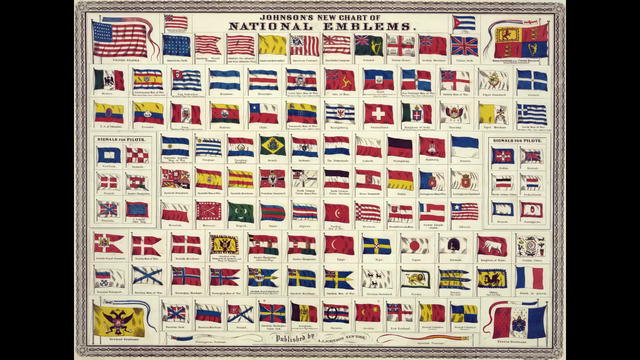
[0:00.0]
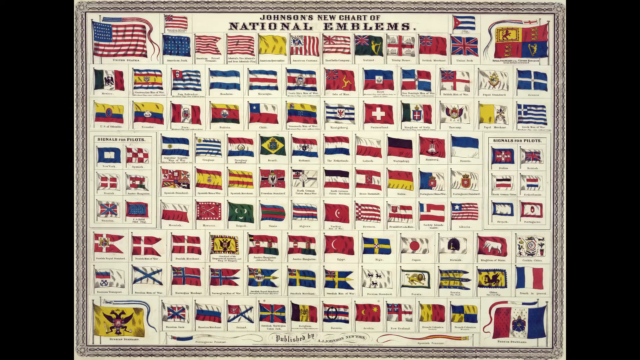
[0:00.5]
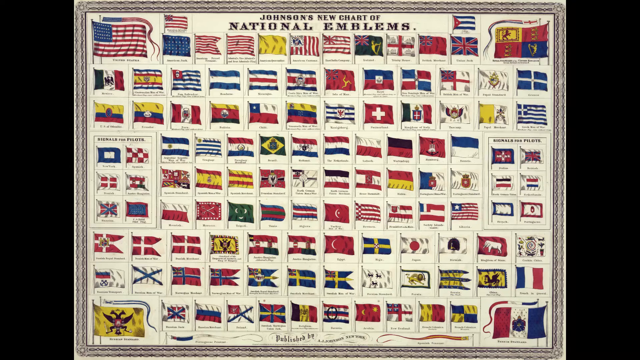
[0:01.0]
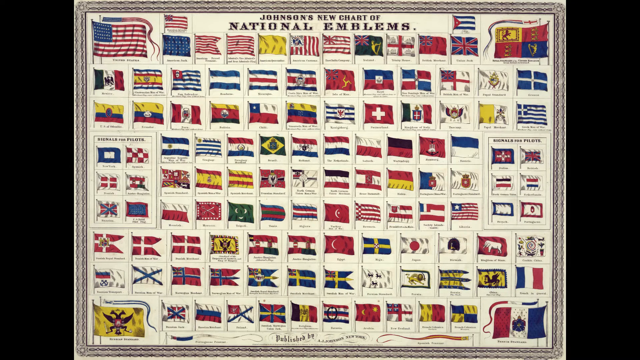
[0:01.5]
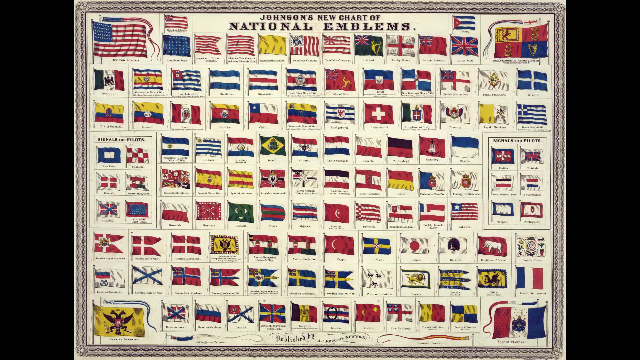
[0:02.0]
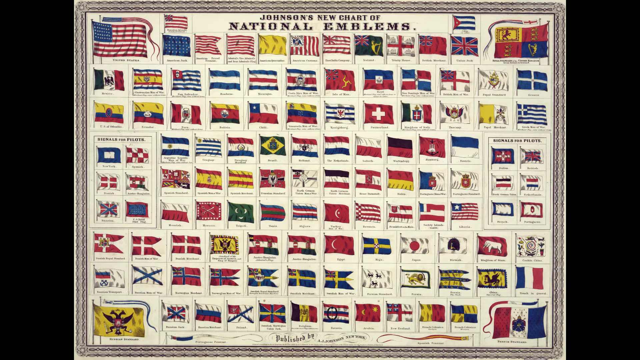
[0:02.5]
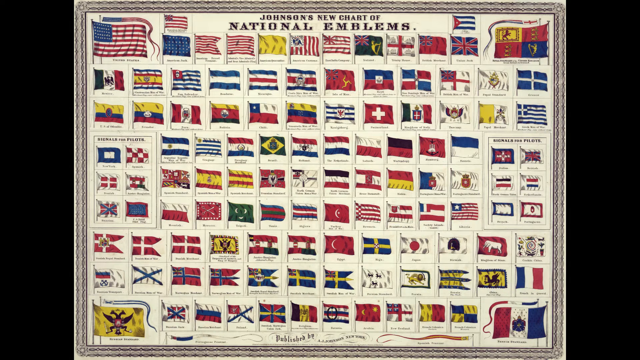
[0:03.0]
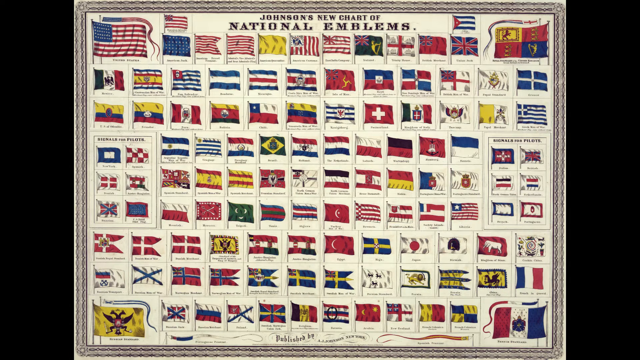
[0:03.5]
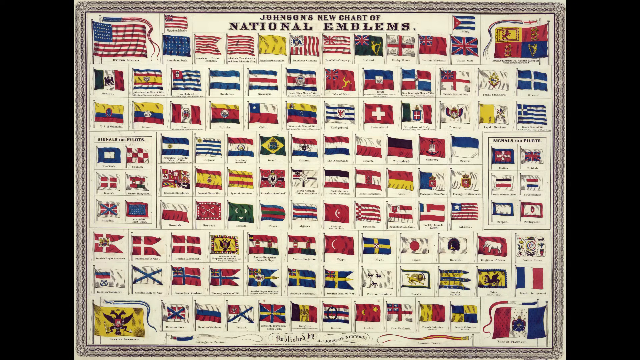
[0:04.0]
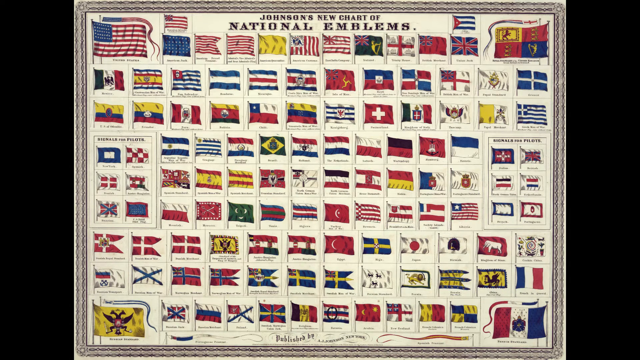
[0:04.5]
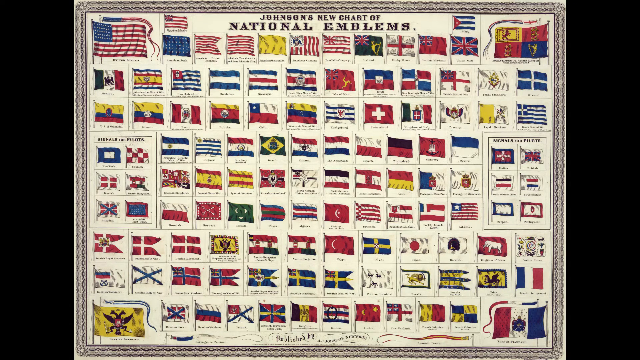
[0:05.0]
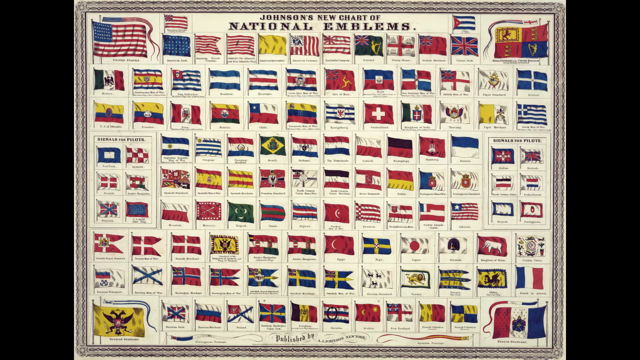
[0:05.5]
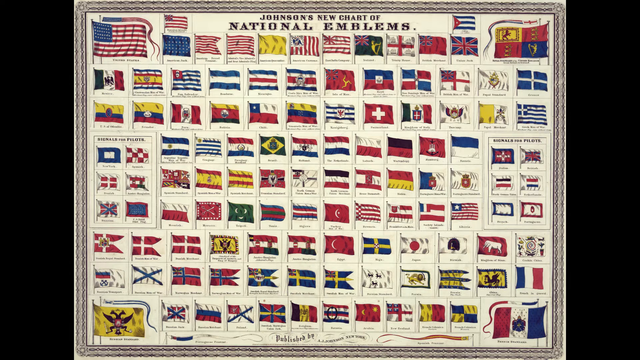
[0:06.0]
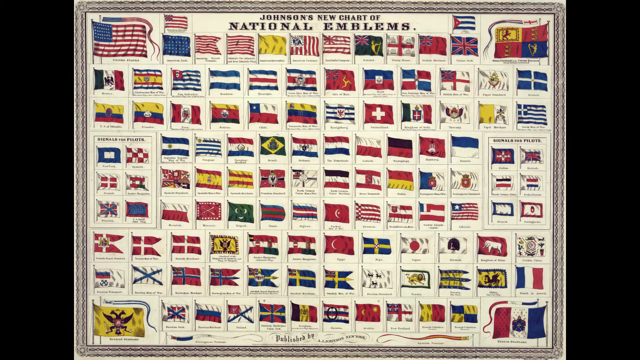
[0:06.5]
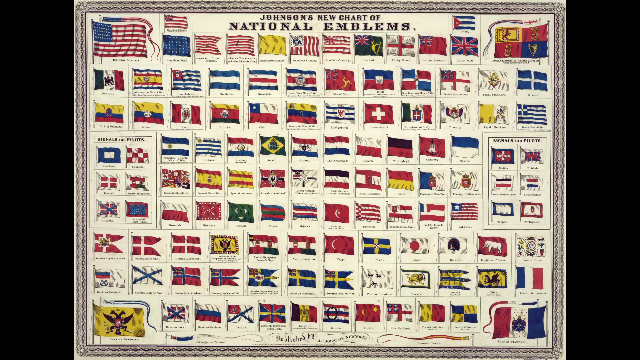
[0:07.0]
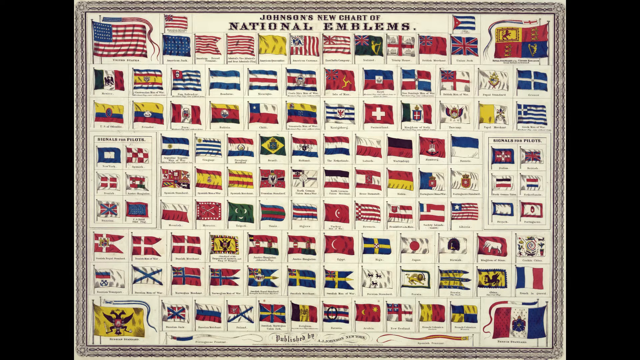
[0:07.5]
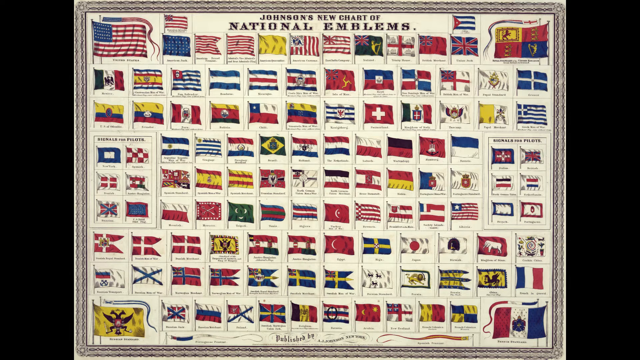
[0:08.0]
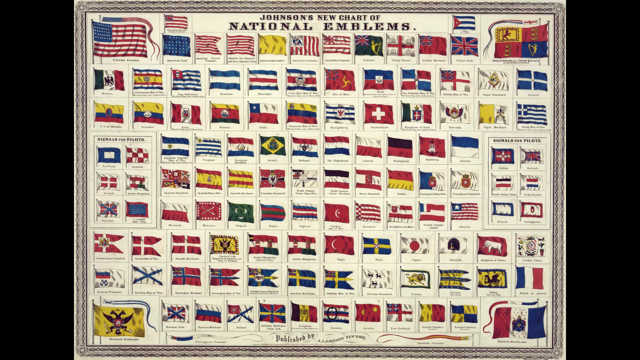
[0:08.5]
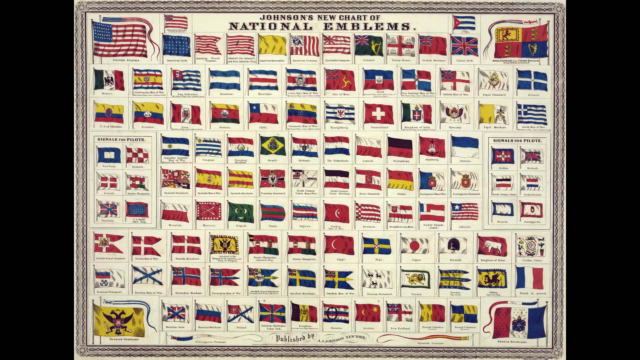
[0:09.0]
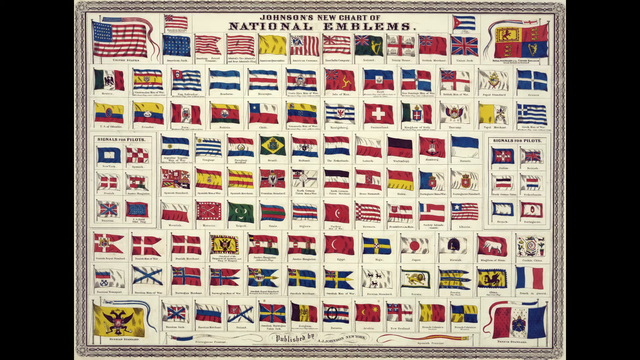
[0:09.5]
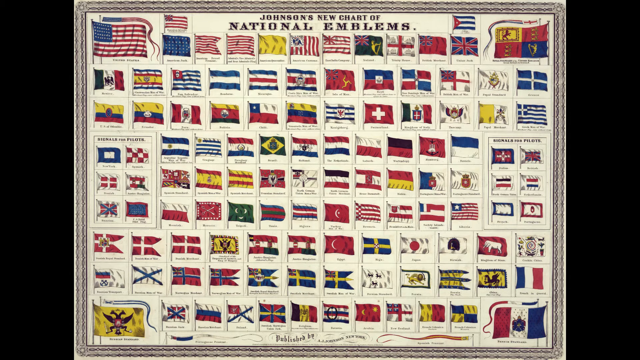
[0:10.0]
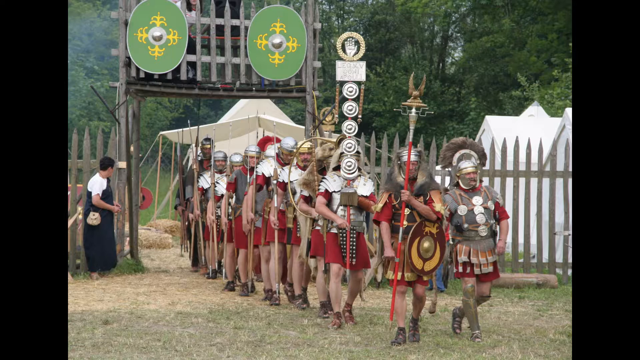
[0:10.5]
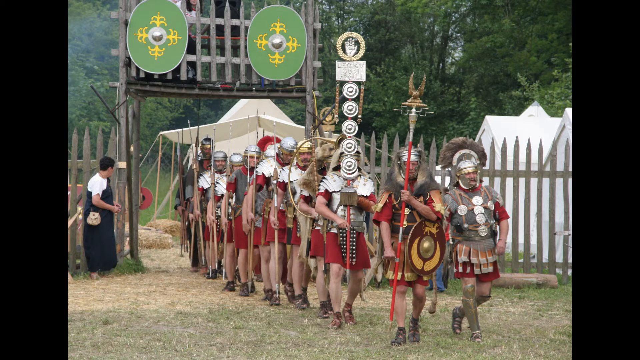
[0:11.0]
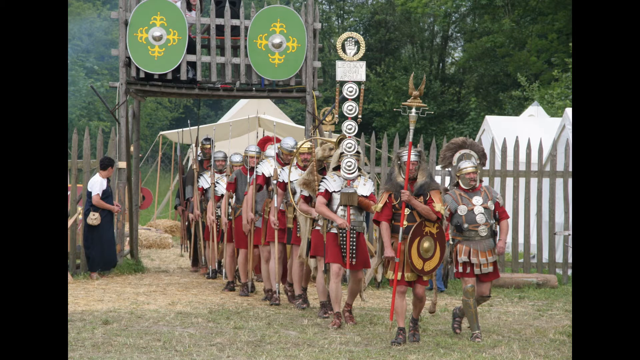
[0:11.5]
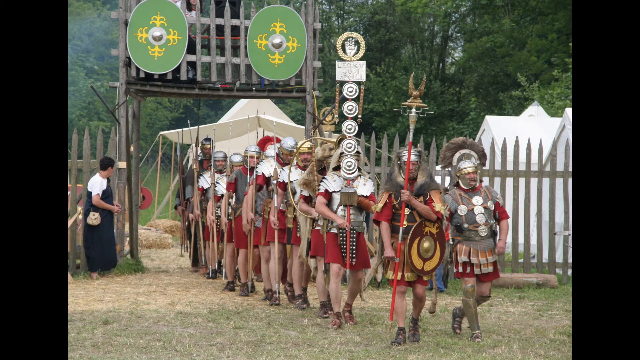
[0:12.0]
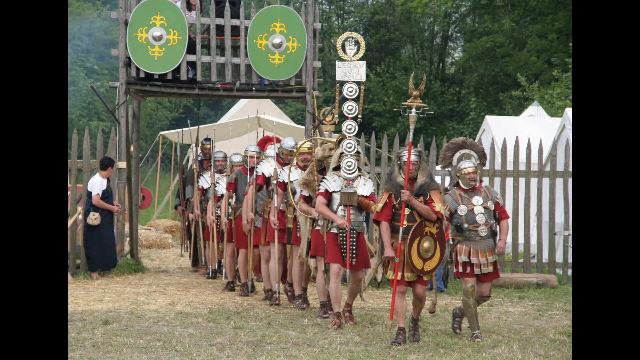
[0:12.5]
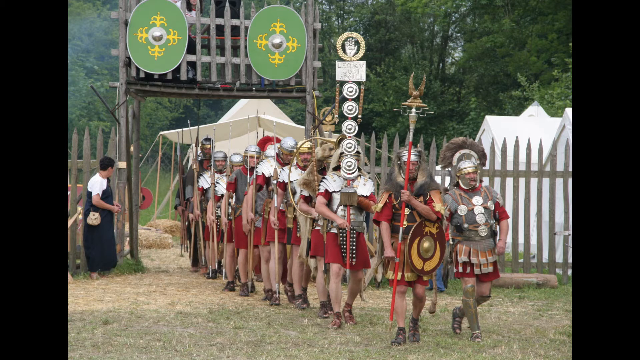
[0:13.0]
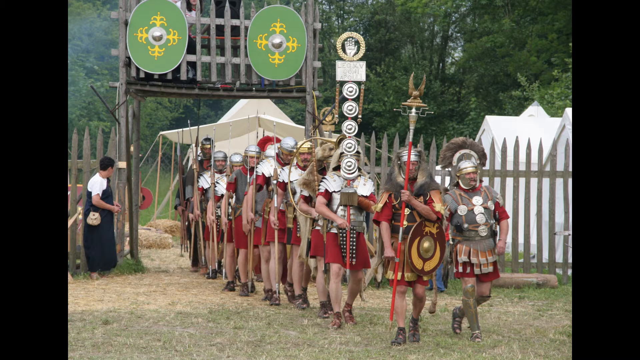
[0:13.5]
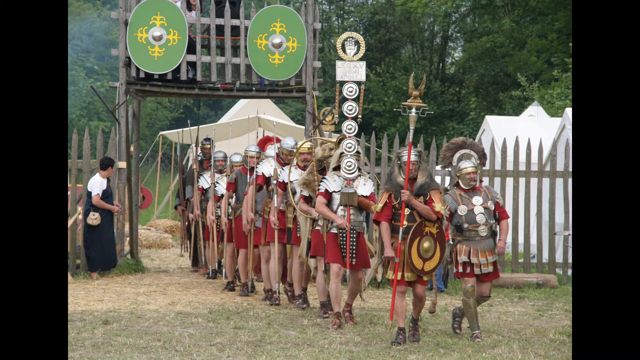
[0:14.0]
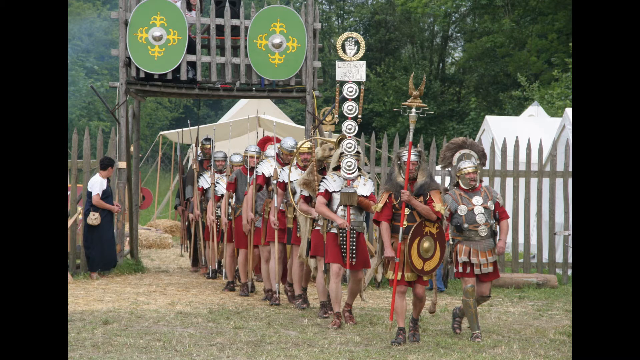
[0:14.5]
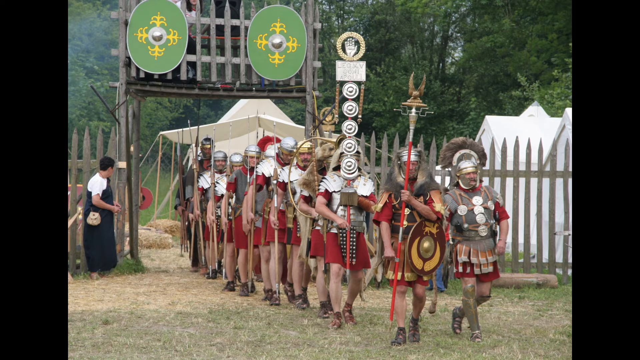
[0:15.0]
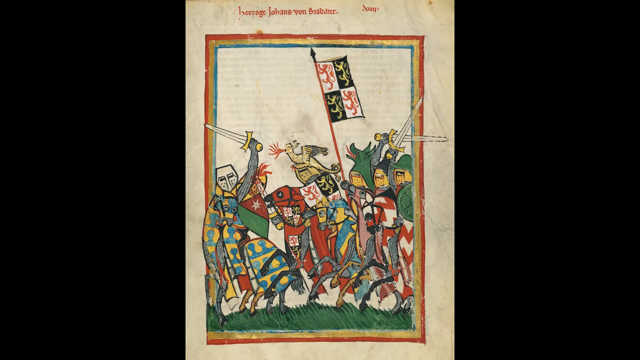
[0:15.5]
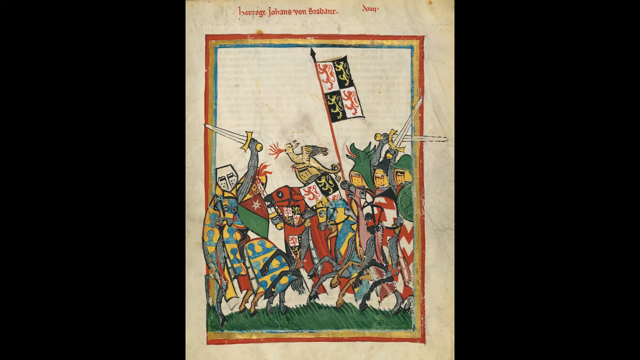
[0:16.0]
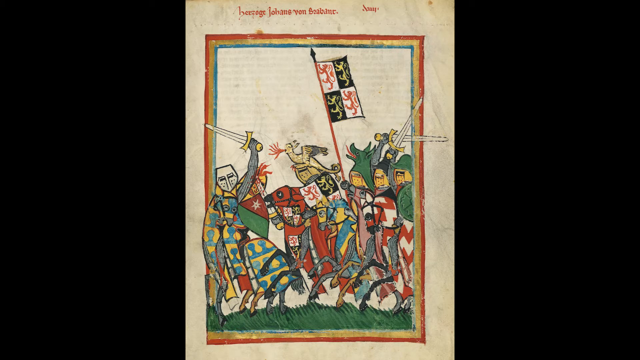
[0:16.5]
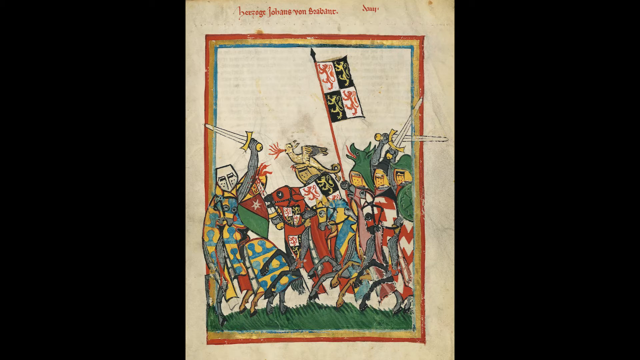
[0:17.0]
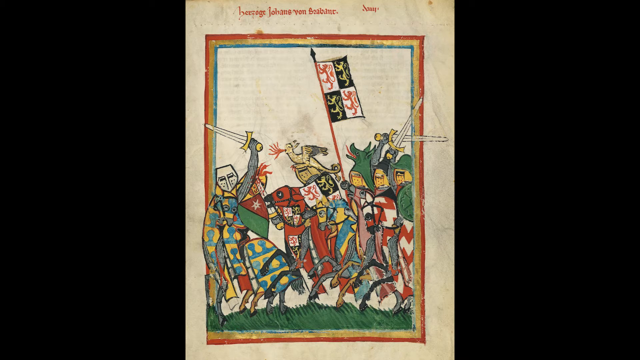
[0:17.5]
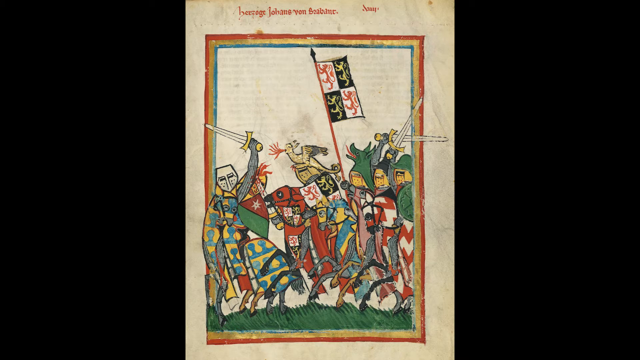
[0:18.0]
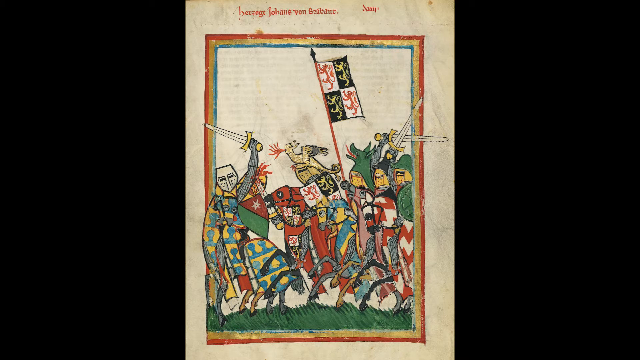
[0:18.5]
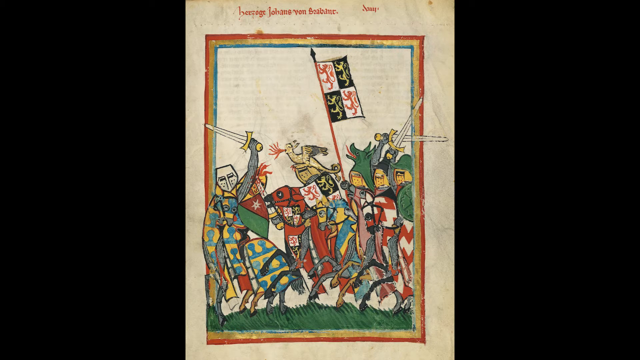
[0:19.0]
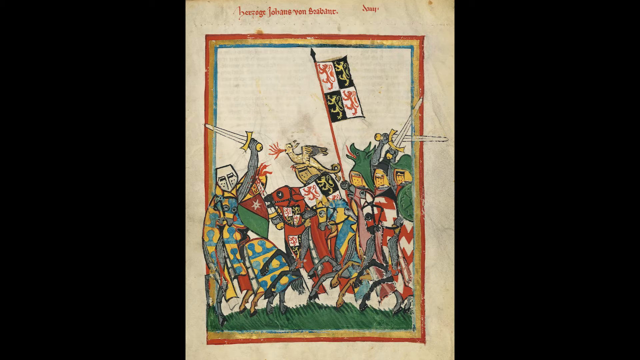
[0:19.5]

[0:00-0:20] The video opens with an illustration of several flags arranged in a grid: the American flag and the flags of dozens of other countries, including Sweden, China and the UK. At the top the text reads "Johnson's New Chart of National Emblems." The flags are drawn individually on a white background, probably with each country's name underneath, though the text is too small to read easily. Next comes a photograph of a whole group of people dressed up as soldiers, possibly Roman soldiers or maybe Vikings, wearing red skirts or kilts. To the left, someone who might be a man in a black apron is possibly holding open a set of wooden doors. The setting is outdoors, with white tents on the right and trees in the background. Then a medieval illustration of a battle appears, with a red, yellow and blue border. The figures wear very brightly colored outfits: the one on the left wears a blue and yellow patterned outfit, while some on the right wear red and white outfits with green hats and green shields. The background is white, and the image looks like a scanned piece of paper.